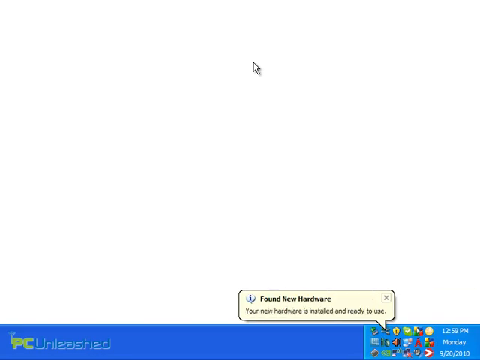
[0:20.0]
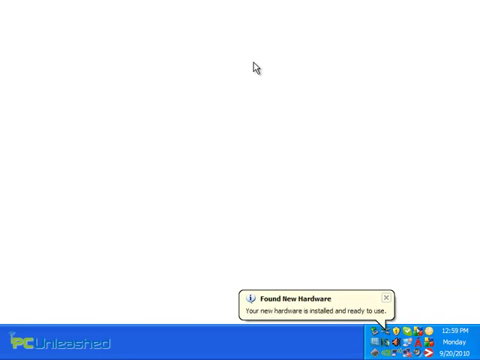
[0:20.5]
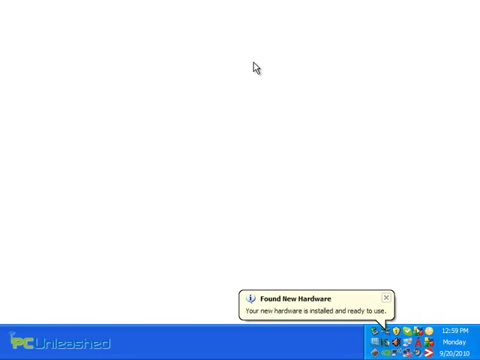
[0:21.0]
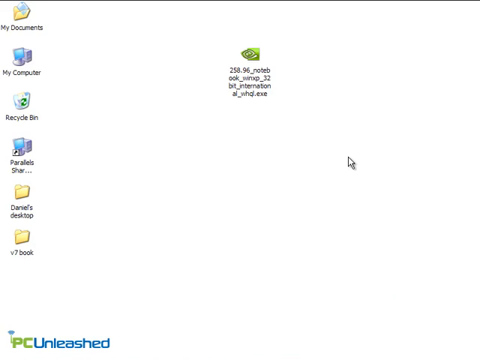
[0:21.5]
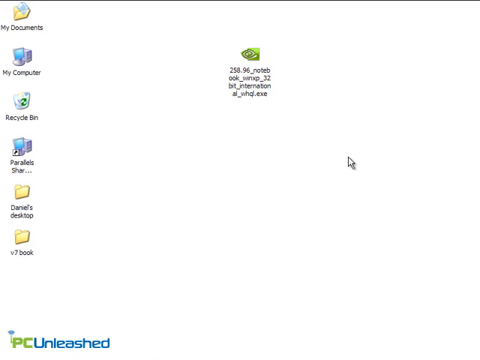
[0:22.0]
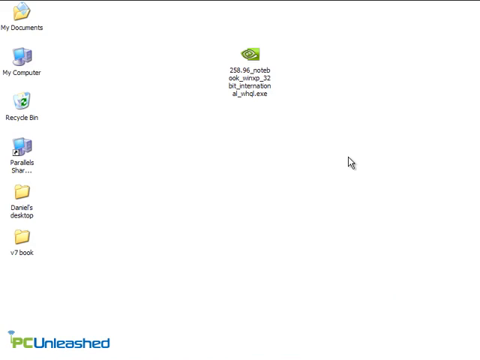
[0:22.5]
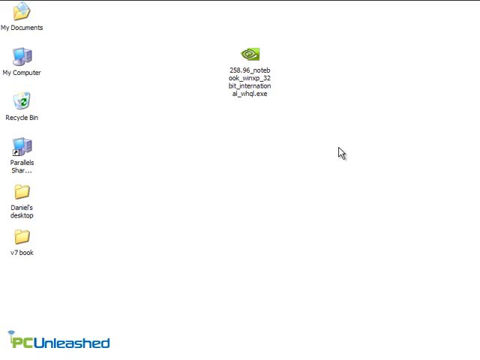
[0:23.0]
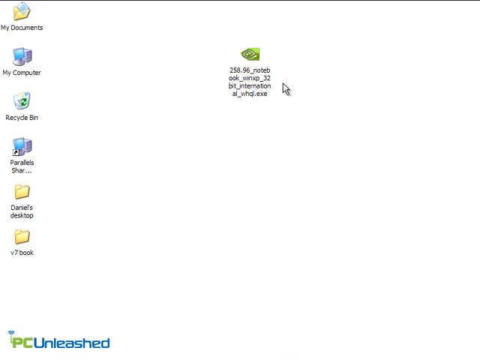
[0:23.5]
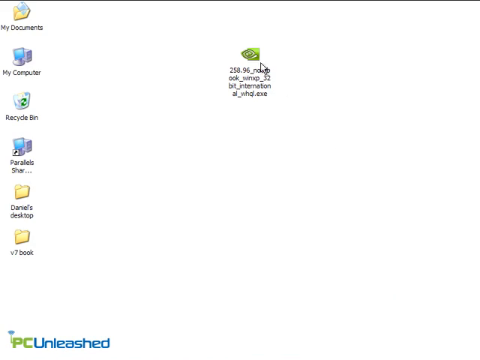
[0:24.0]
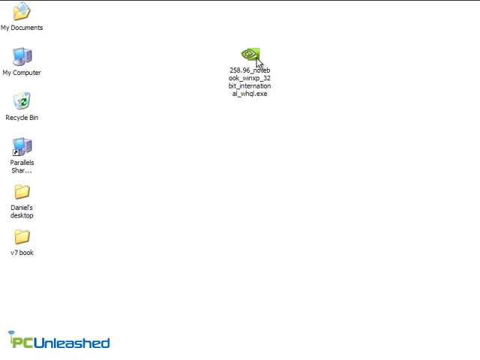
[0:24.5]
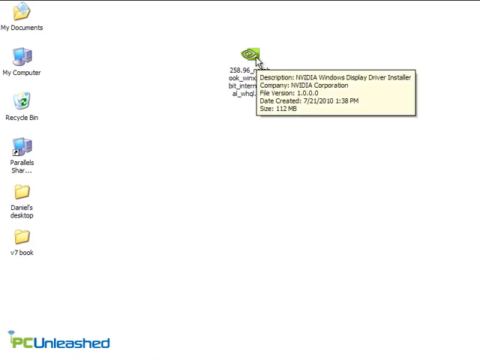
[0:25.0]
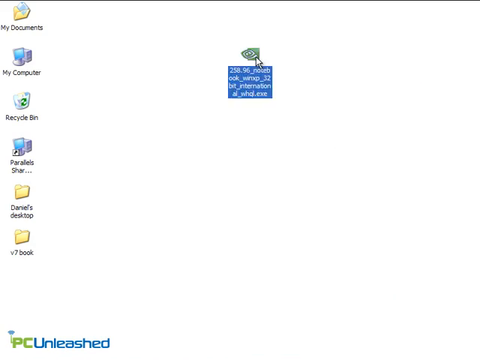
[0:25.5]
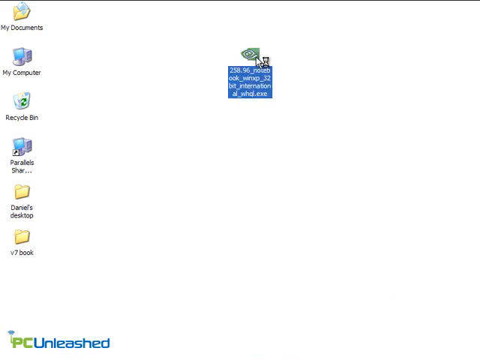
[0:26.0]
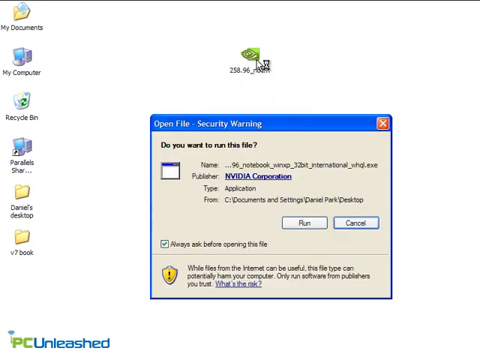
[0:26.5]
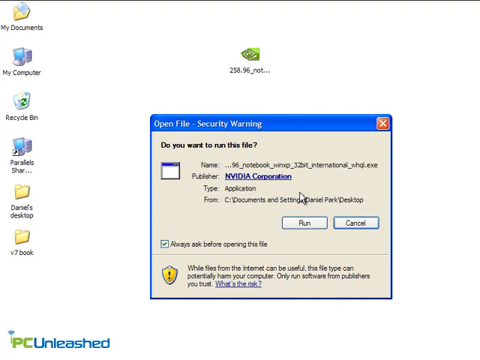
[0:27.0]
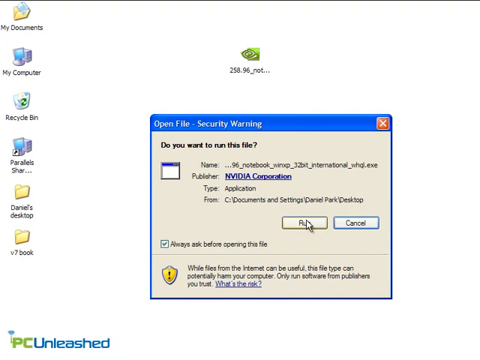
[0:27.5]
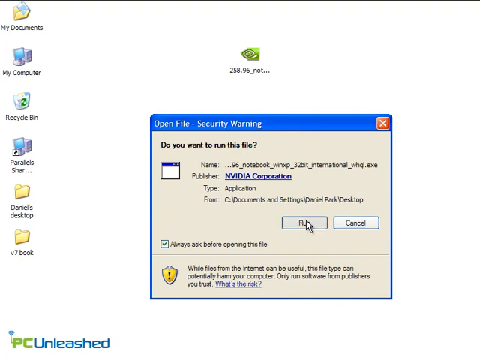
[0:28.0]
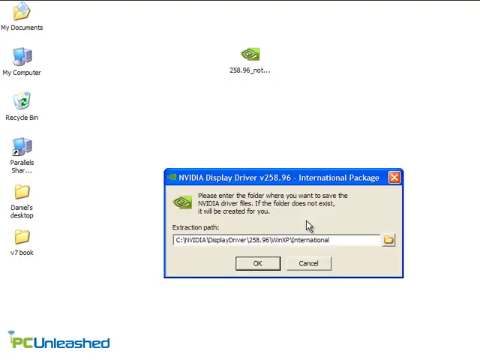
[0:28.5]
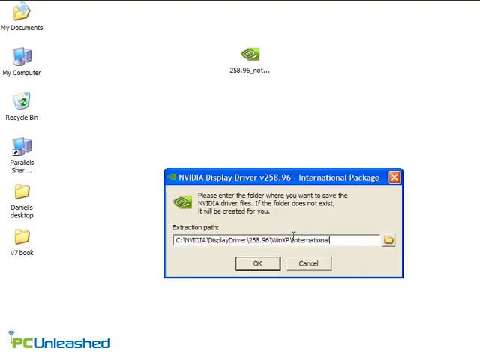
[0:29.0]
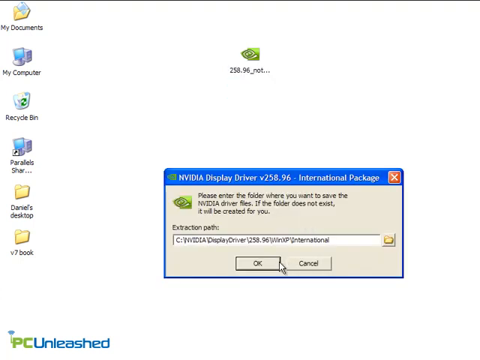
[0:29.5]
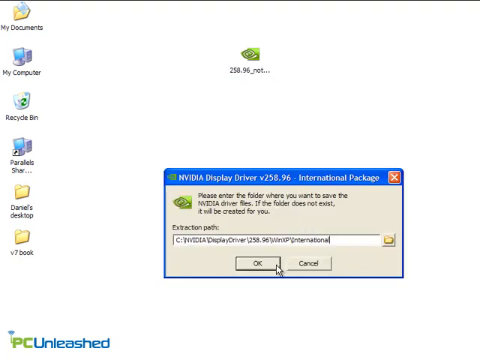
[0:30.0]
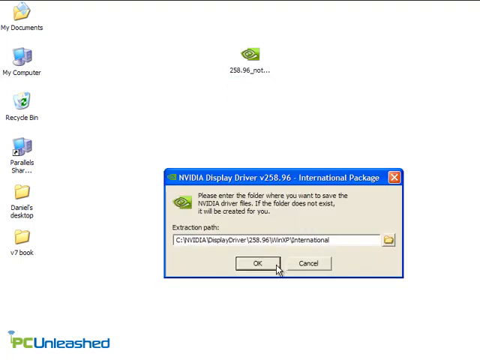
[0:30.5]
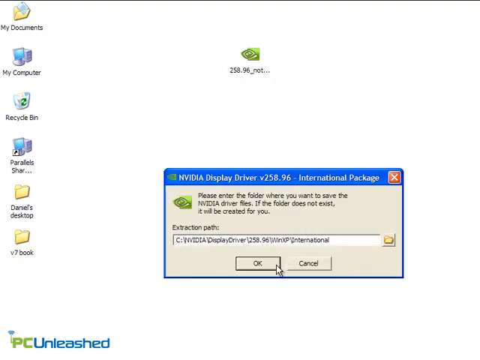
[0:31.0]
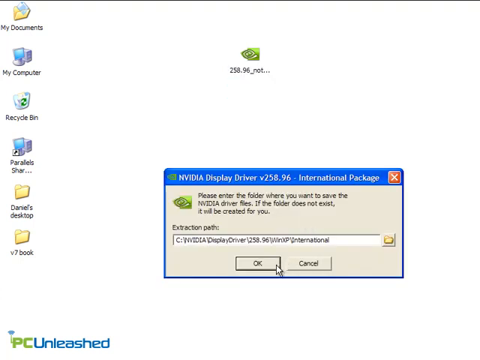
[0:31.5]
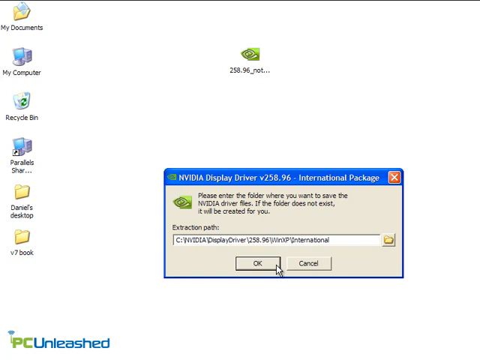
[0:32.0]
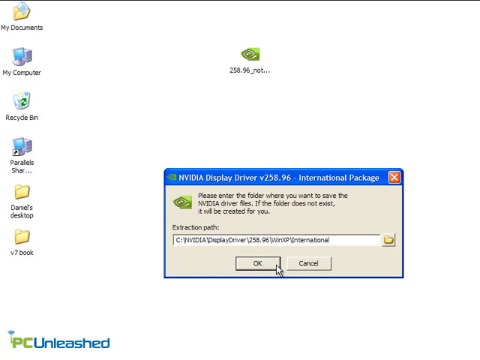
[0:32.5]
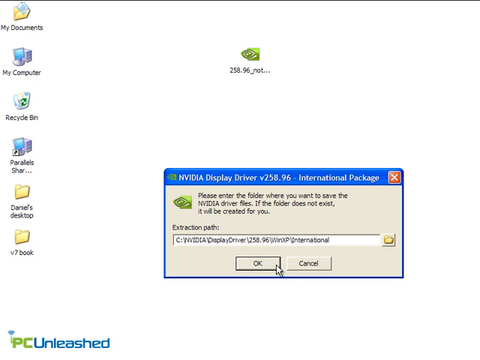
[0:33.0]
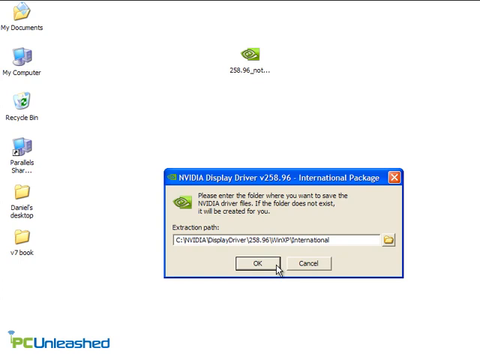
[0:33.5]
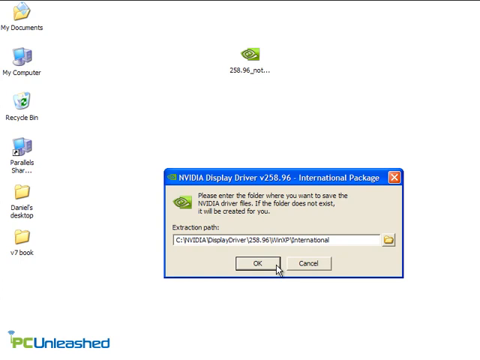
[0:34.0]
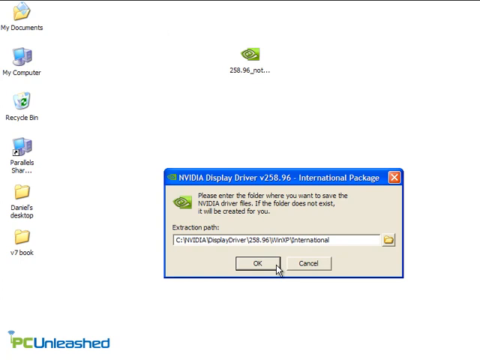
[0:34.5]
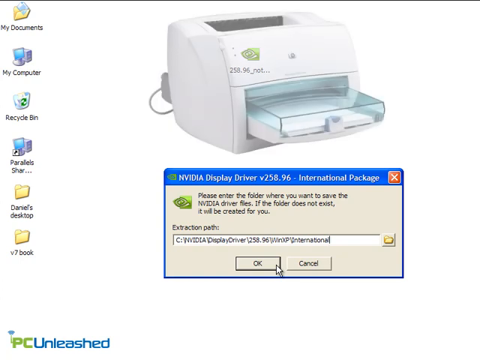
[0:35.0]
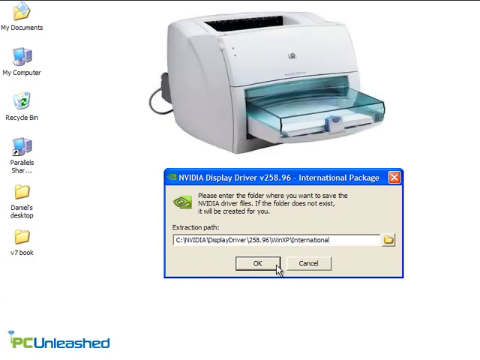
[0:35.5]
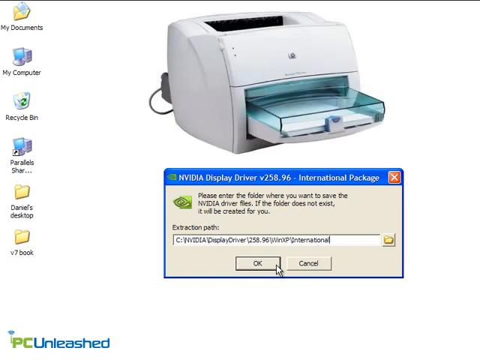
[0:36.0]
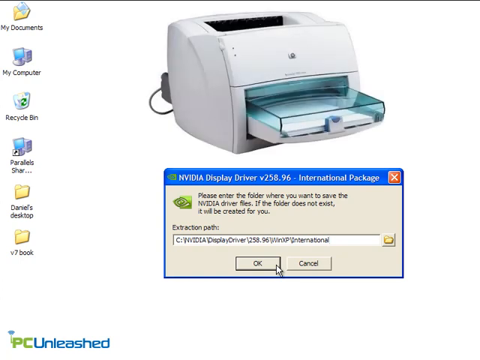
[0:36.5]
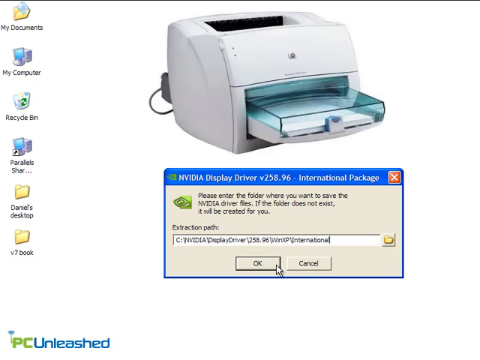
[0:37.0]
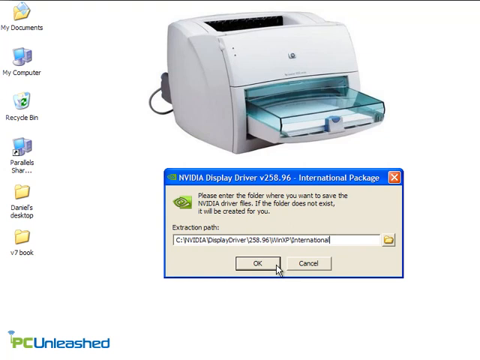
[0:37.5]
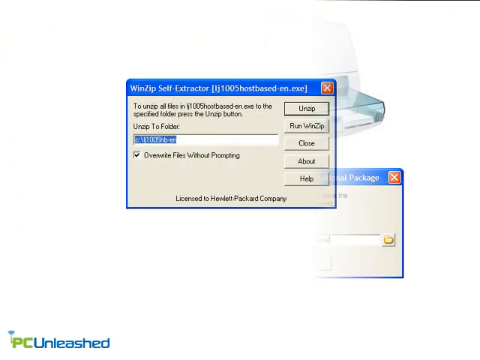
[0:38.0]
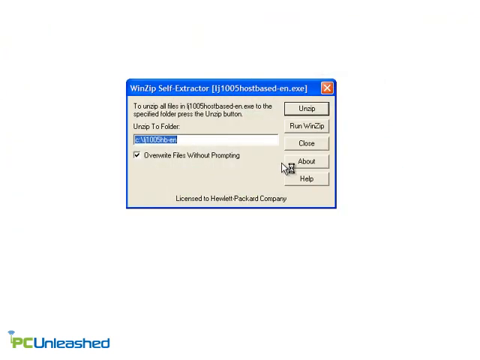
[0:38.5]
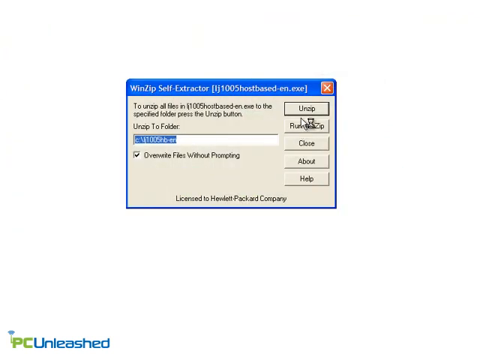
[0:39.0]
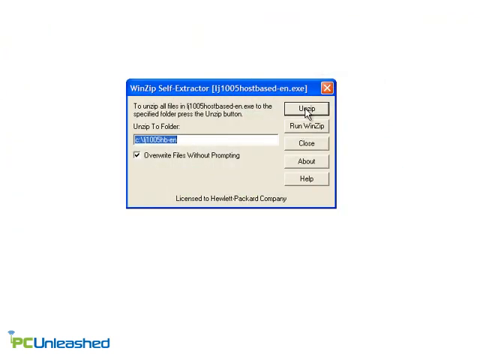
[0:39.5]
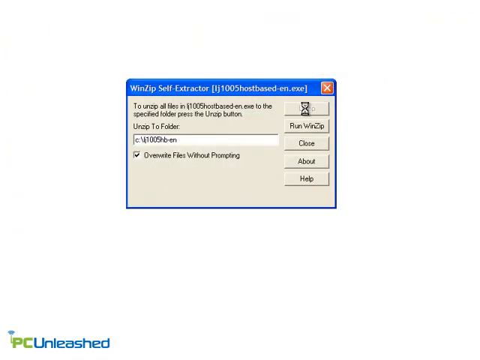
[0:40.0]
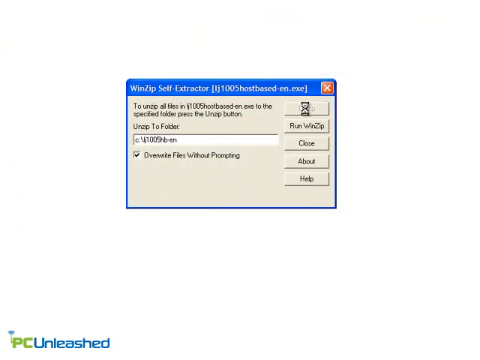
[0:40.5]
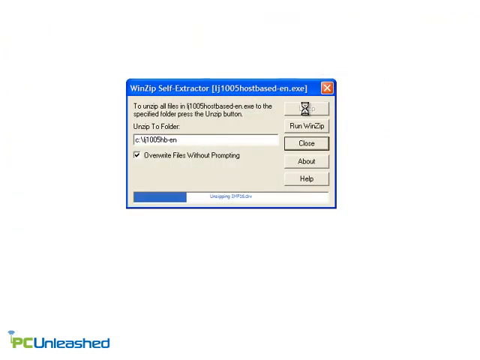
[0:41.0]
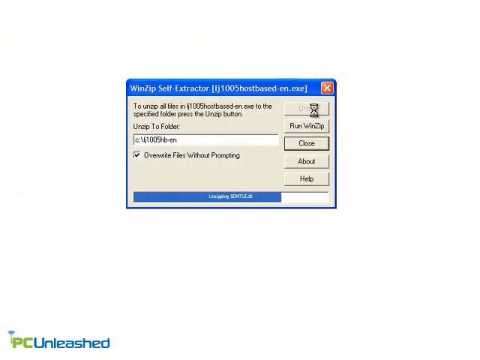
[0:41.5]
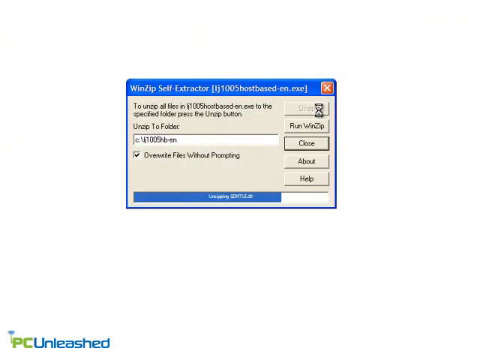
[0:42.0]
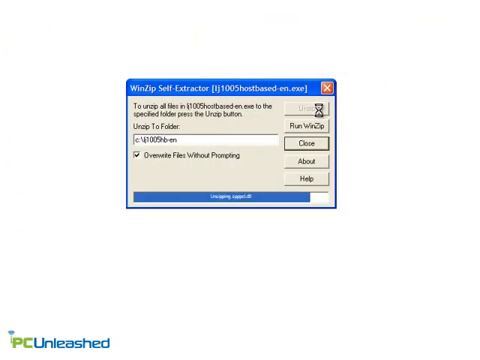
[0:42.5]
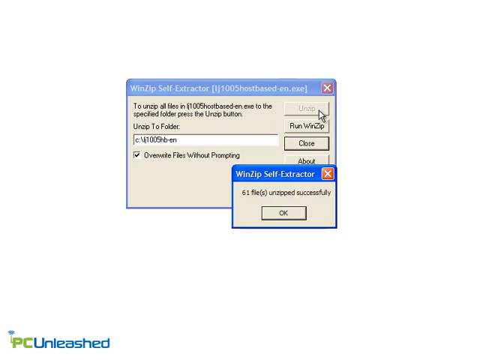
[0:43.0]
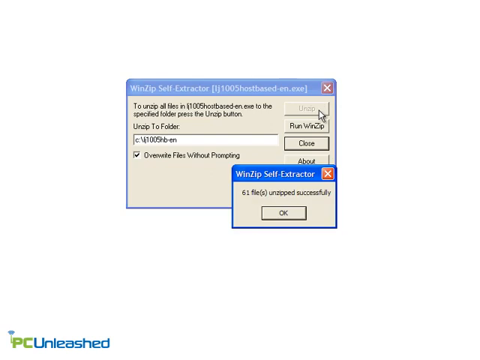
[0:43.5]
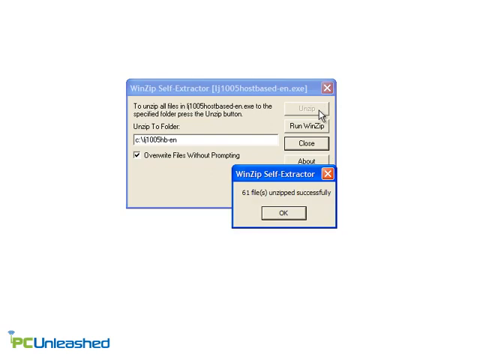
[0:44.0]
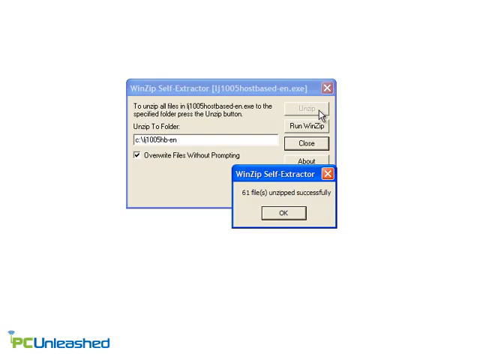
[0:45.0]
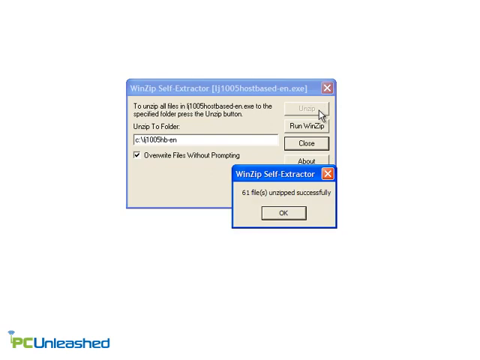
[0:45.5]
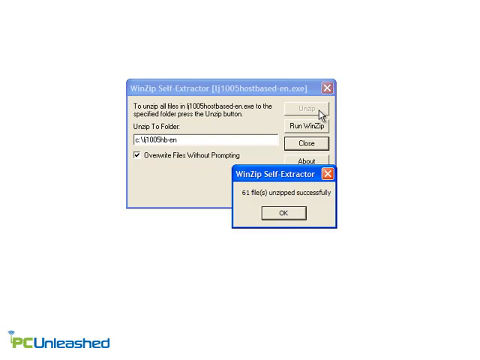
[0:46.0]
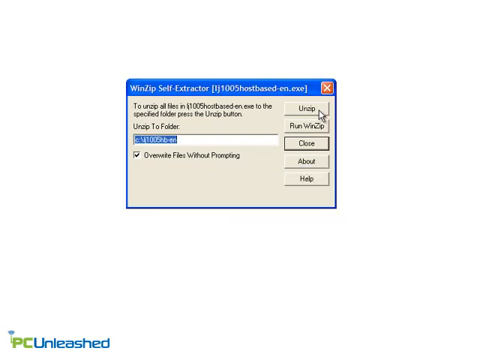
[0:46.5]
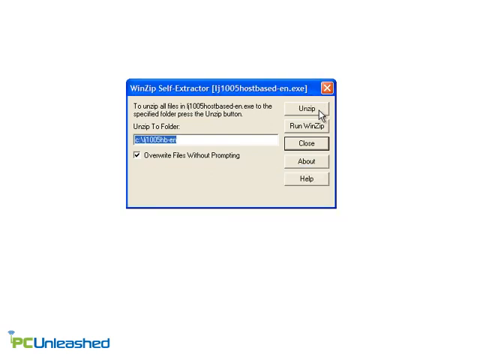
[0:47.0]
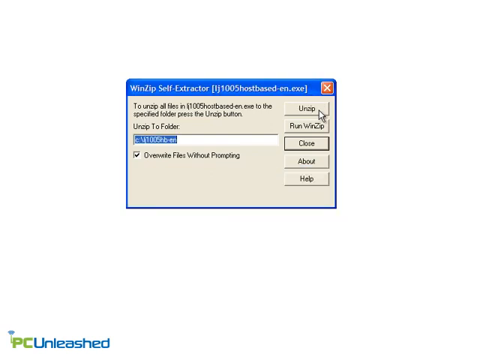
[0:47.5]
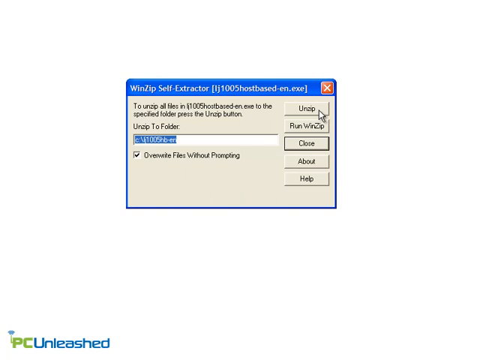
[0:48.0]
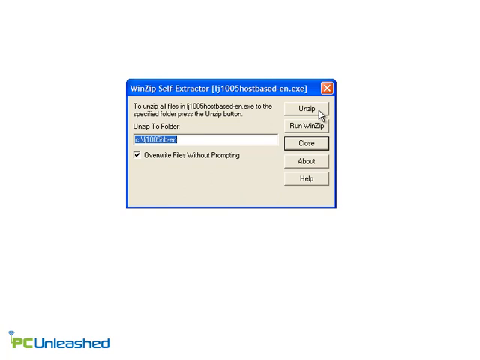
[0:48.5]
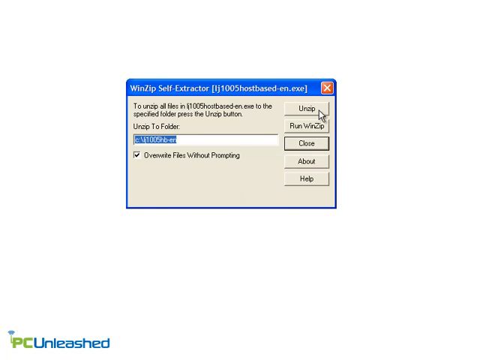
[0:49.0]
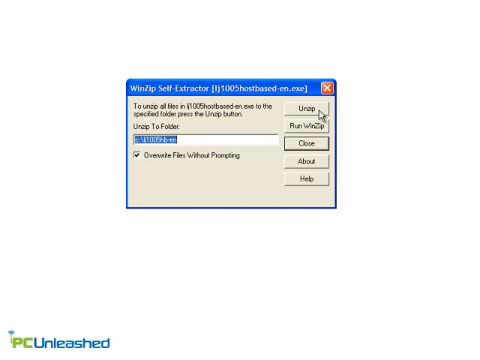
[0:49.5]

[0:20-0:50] A blue screen appears at the start with a couple of notifications in the bottom right corner, and then the view moves to a desktop with several icons: My Documents, My Computer, Recycle Bin, Parallel Serving, Desktop, Daniel and Seven Books. A file is opened and a security warning pops up. An extraction path is shown, then the printer appears. A WinZip self-extractor window follows, and clicking it starts the process. The WinZip window states that to unzip all files to the specified folder, the unzip button should be pressed. It offers several options: run WinZip, close, about and help, along with a box that can be checked to overwrite files without prompting.